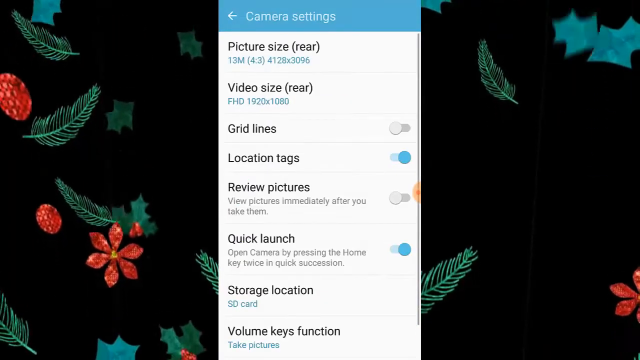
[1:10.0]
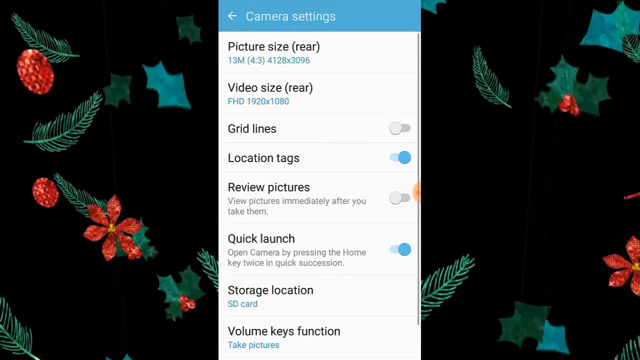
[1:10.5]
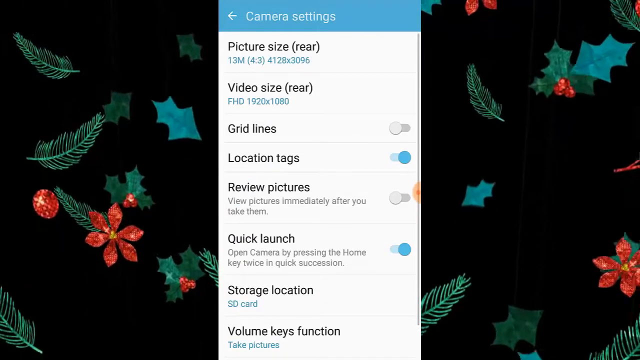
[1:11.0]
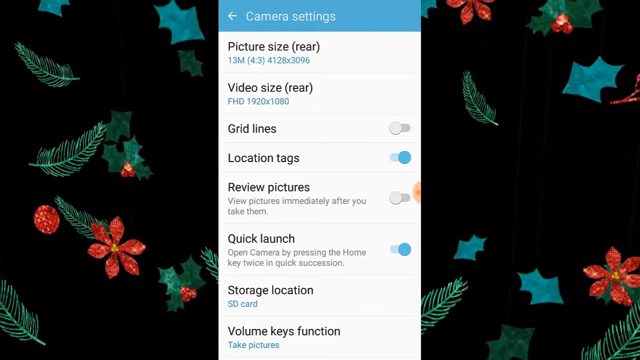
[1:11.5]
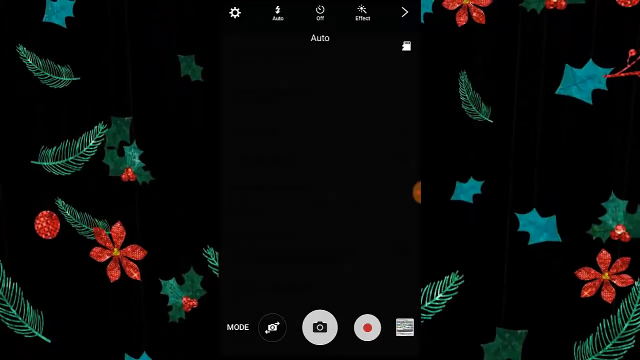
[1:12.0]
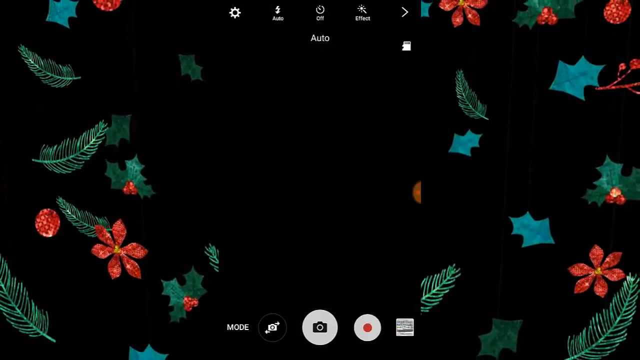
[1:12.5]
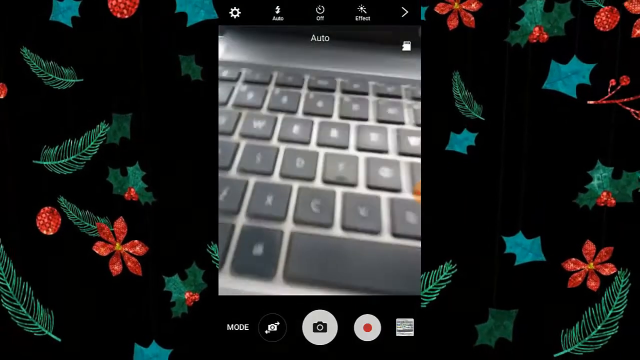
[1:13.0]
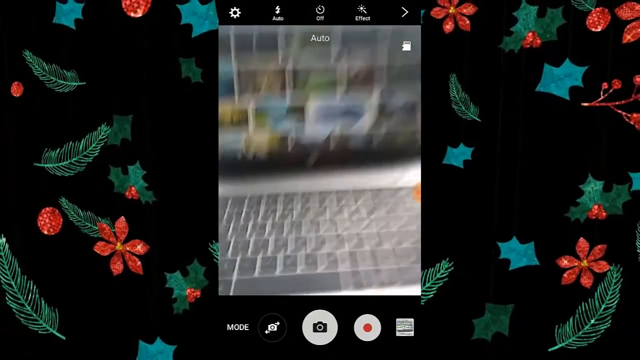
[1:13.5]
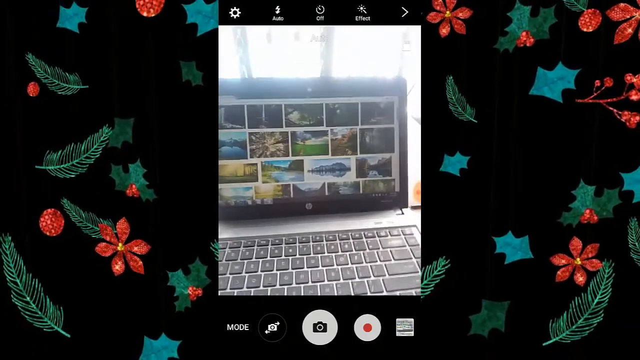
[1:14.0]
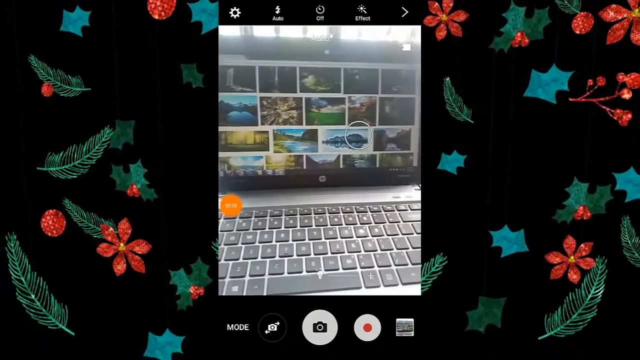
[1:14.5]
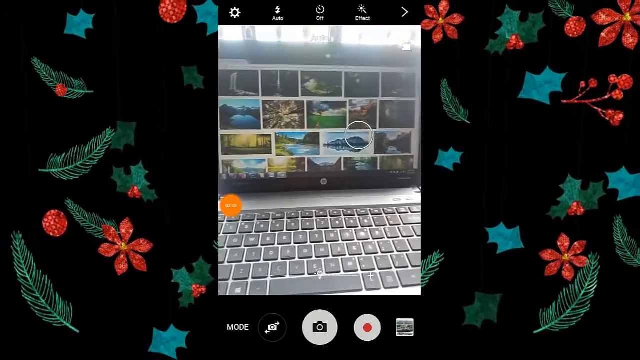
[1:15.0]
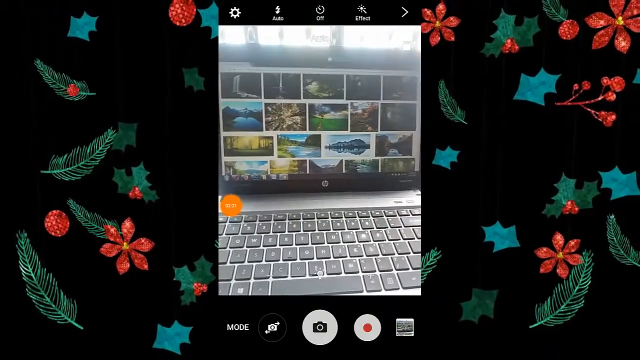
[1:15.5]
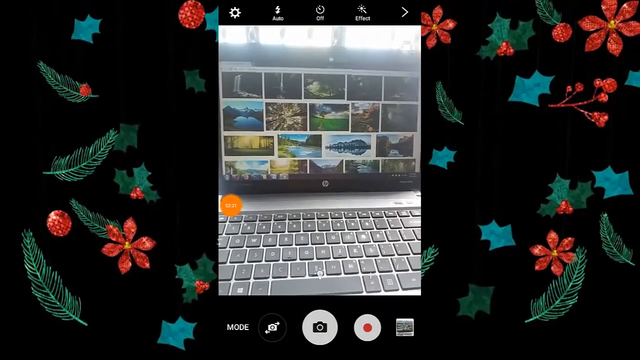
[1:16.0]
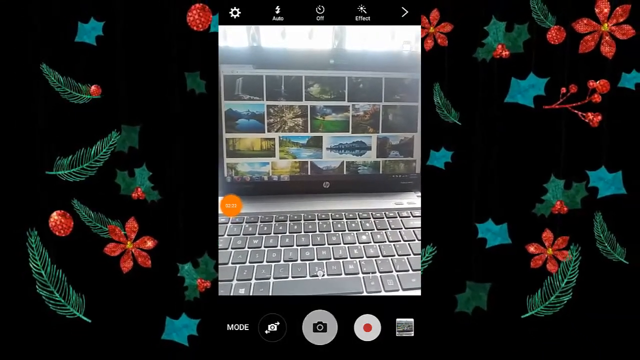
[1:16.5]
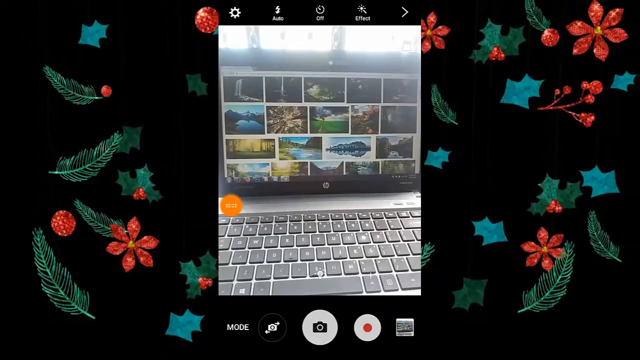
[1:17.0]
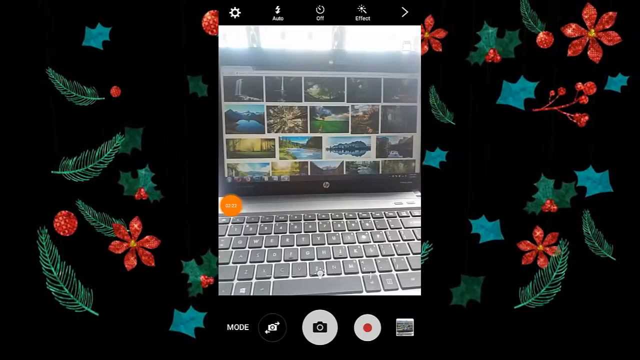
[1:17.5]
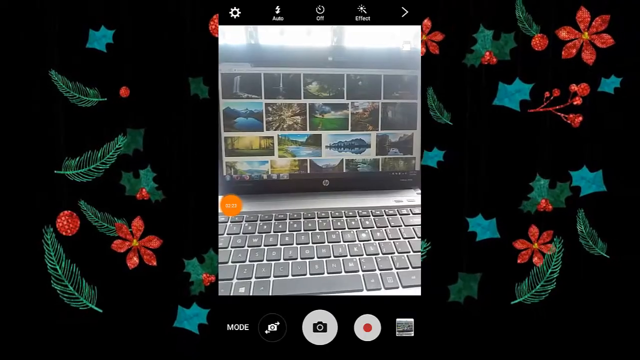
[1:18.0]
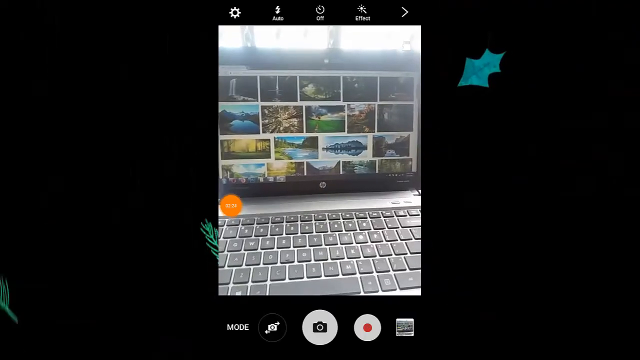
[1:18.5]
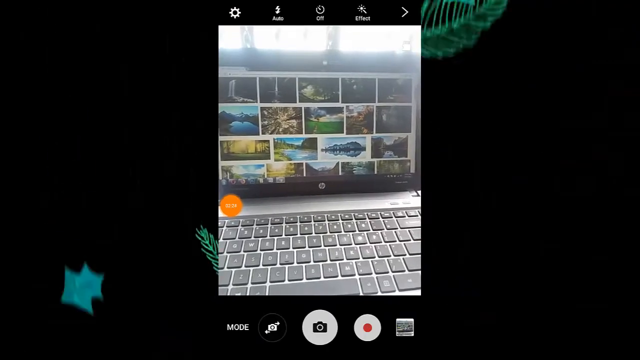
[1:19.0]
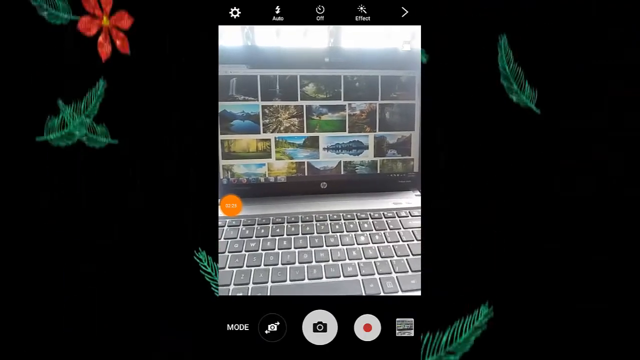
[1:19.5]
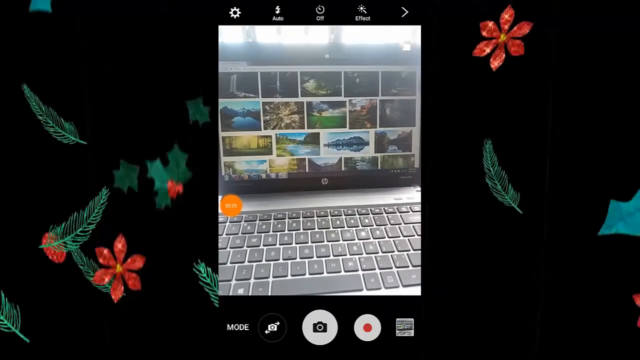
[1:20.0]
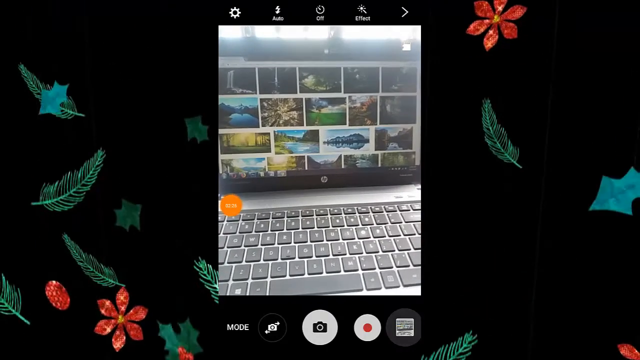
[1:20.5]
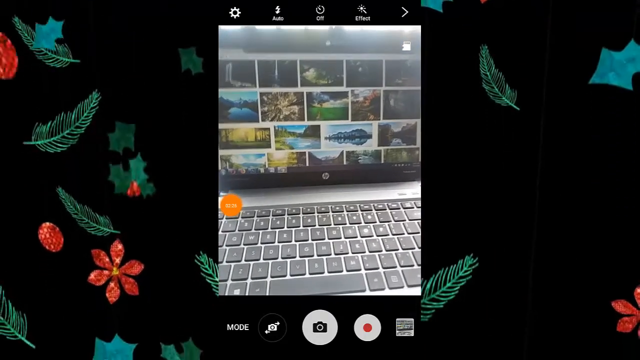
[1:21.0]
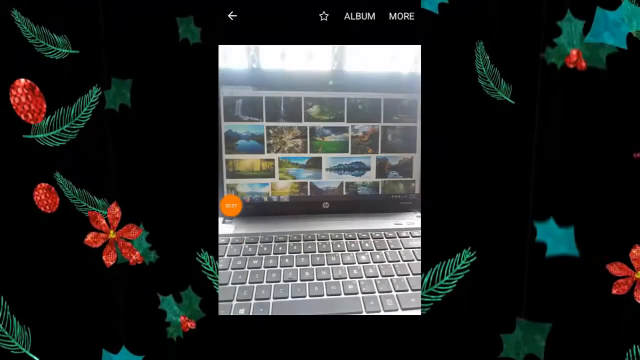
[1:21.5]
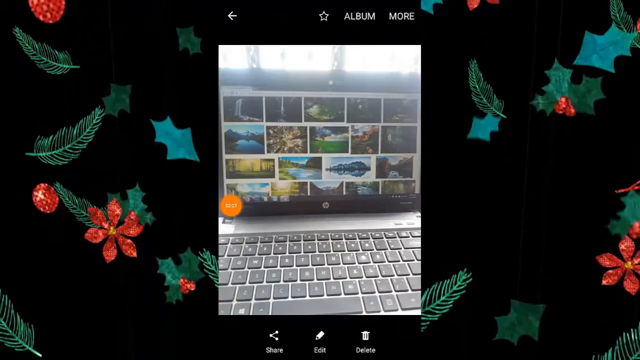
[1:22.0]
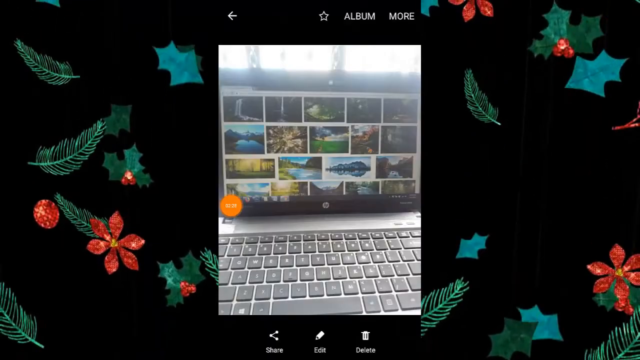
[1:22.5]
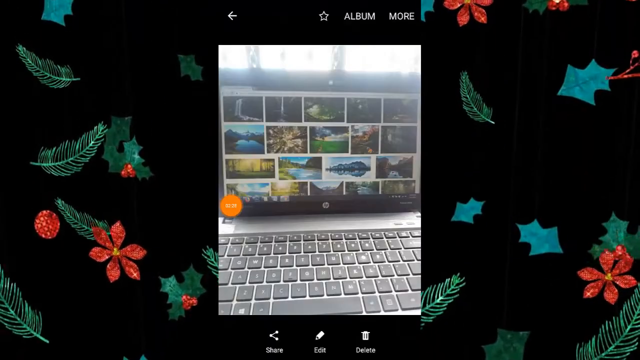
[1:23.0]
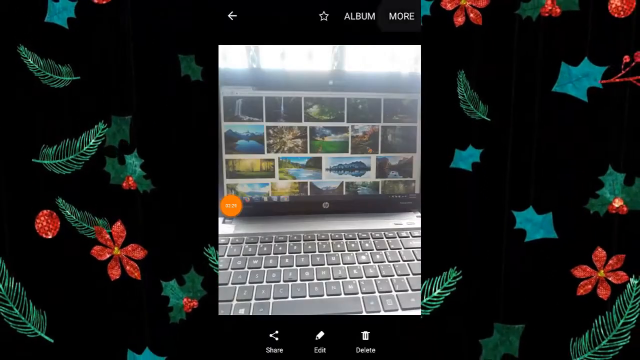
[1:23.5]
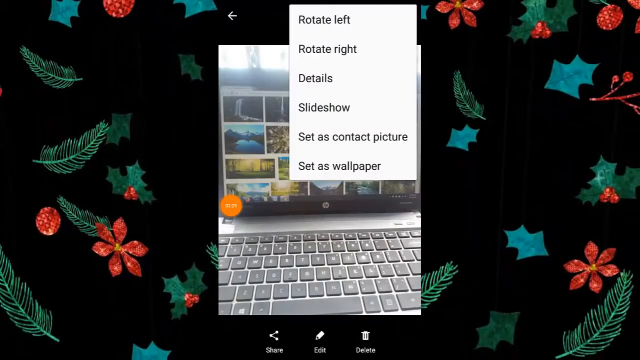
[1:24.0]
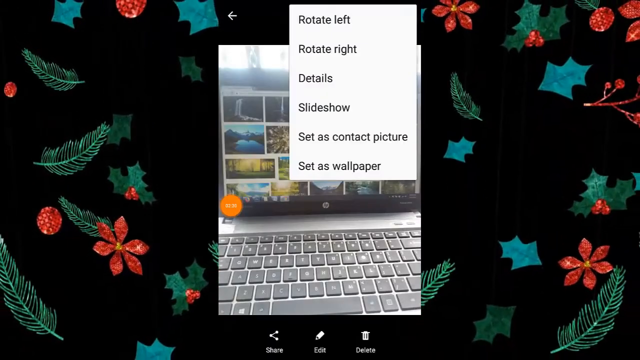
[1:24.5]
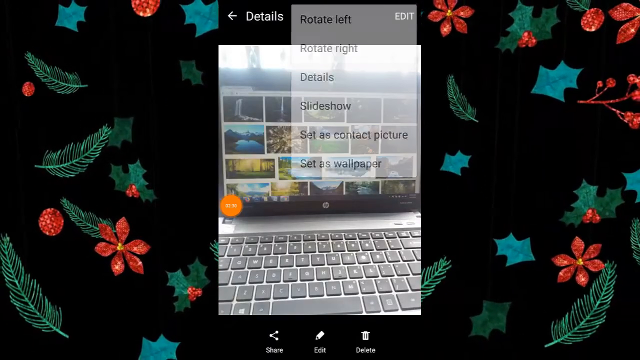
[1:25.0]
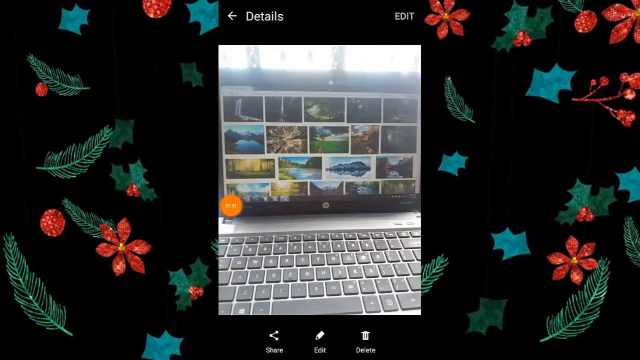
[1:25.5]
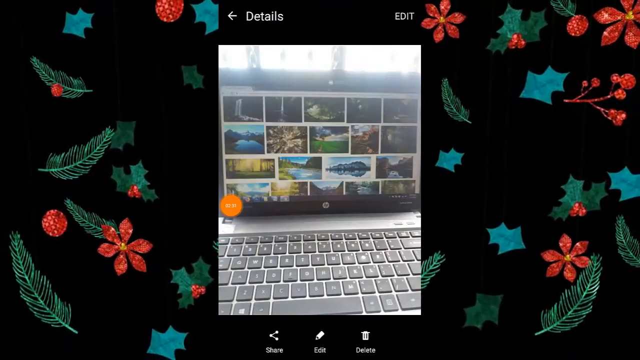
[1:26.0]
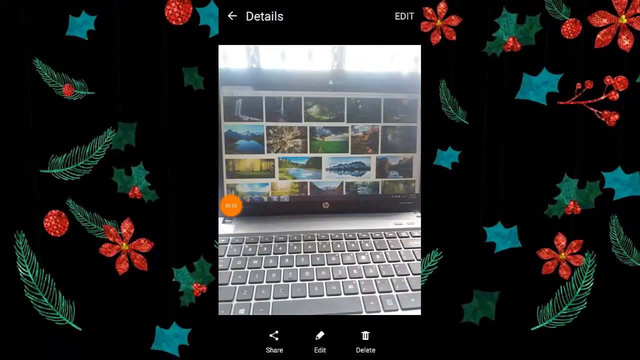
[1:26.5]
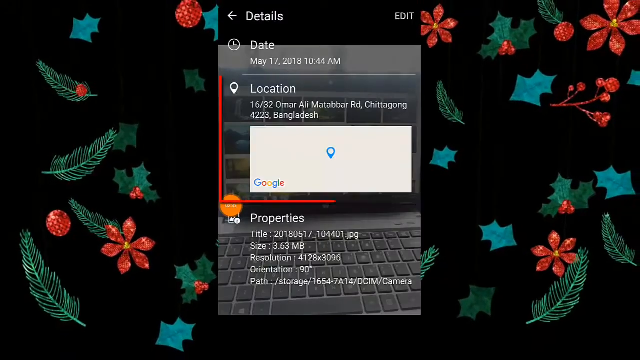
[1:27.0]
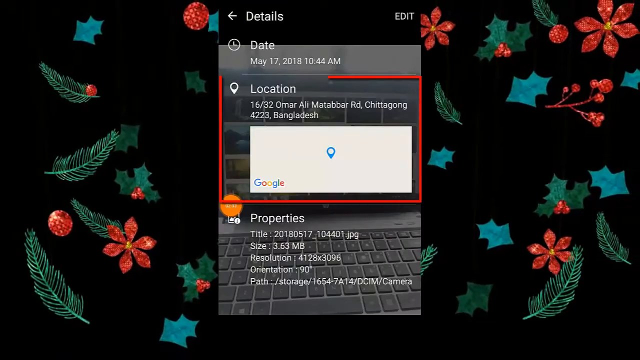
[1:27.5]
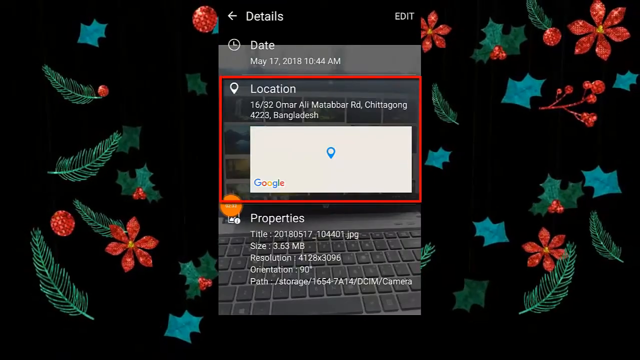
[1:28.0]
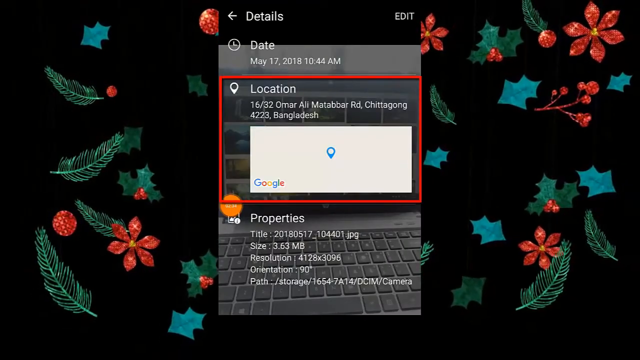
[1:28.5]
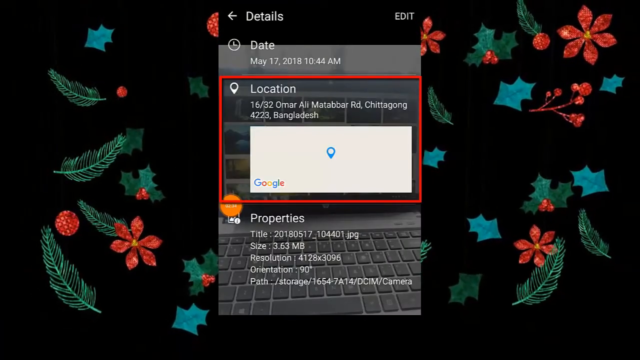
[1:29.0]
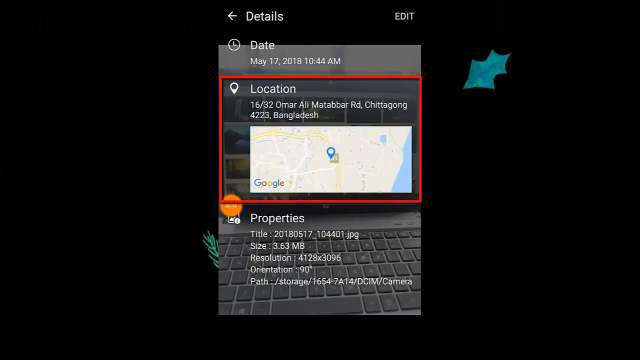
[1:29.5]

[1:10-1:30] A screencast of a smartphone shows the Camera Settings section, with the options Picture Size, Video Size, Grid Lines, Location Tags, Review Pictures, Quick Launch, and Storage Location. Grid Lines is turned off, Location Tags is turned on, Review Pictures is turned off, and Quick Launch is turned on. To the side of the screencast is a black background with an animation of leaves and flowers blowing in the wind. The user switches from Camera Settings to the camera and looks through it at the laptop computer, a small gray portable computer with a black keyboard. On its screen, a web browser is open to Google Image Search, showing various naturalistic settings like lakes, mountains, and forests. A right-click menu appears with the options Rotate Left, Rotate Right, Details, Slideshow, Set as Contact Picture, and Set as Wallpaper. The user clicks Details, which shows the date, location, and properties. The Location section is highlighted with a red circle, and the location is set to 1632 Omar Ali Madabar Road in Chittagong 4223, Bangladesh.